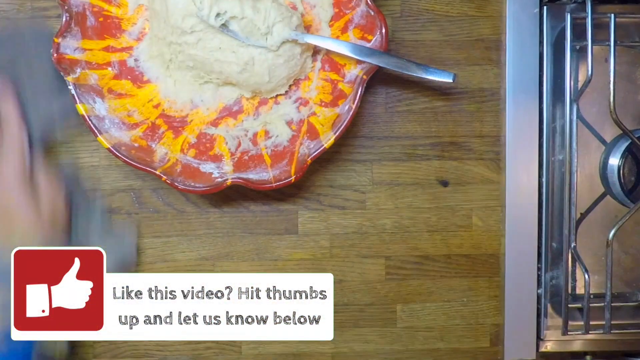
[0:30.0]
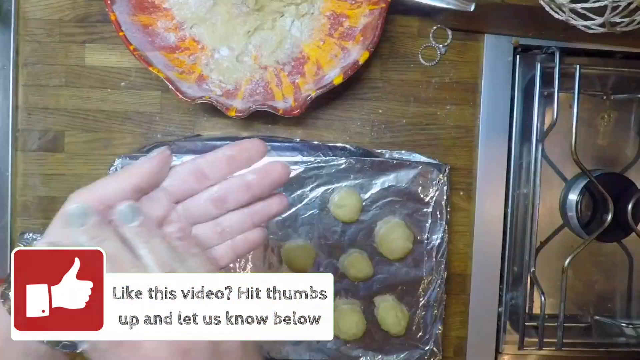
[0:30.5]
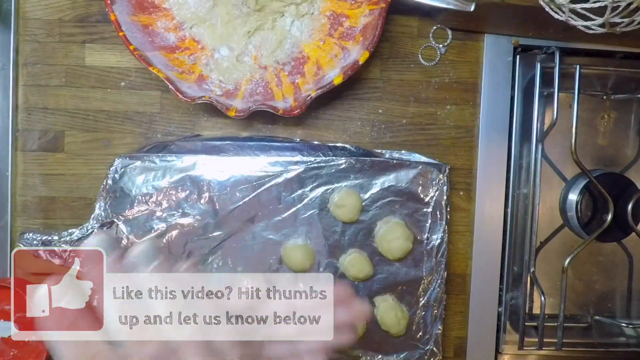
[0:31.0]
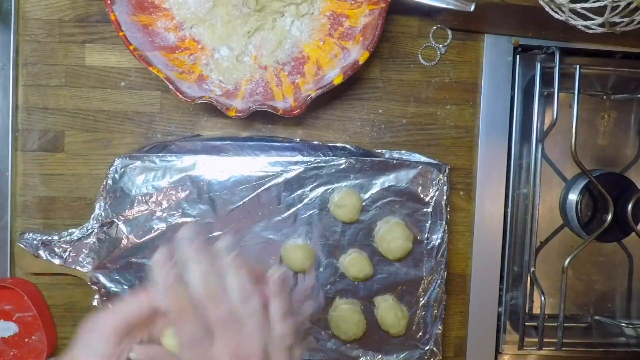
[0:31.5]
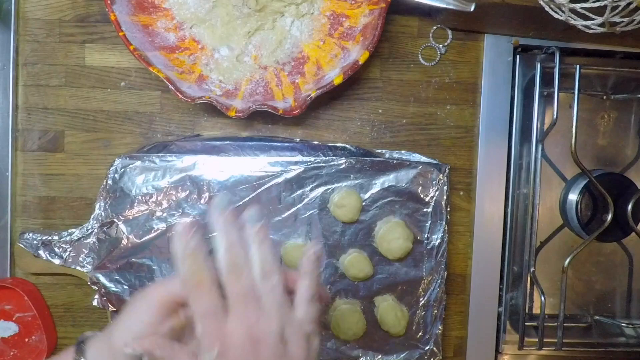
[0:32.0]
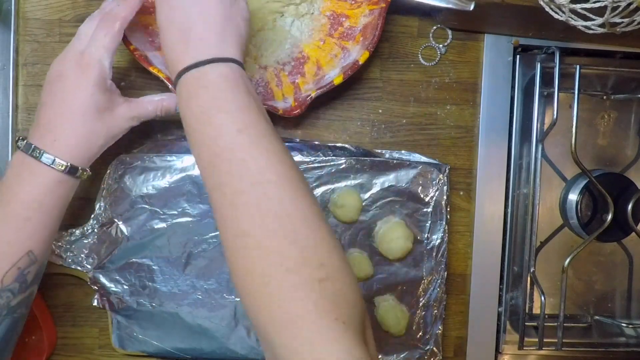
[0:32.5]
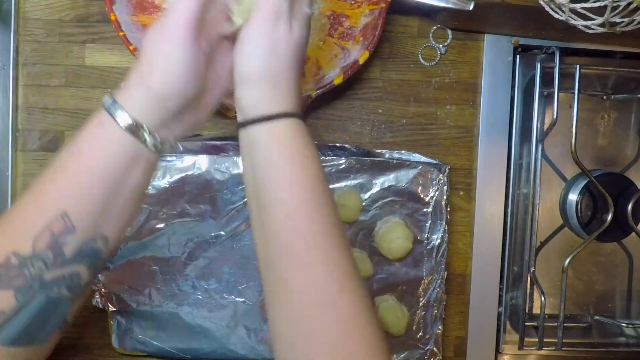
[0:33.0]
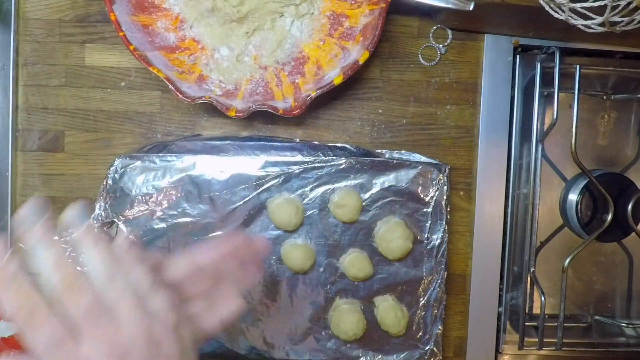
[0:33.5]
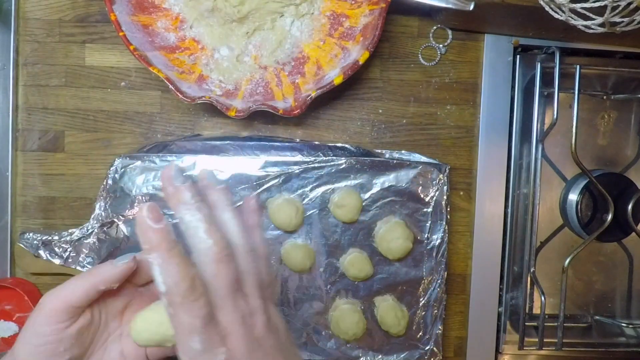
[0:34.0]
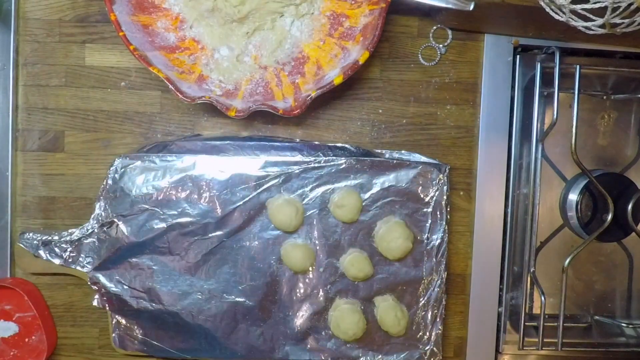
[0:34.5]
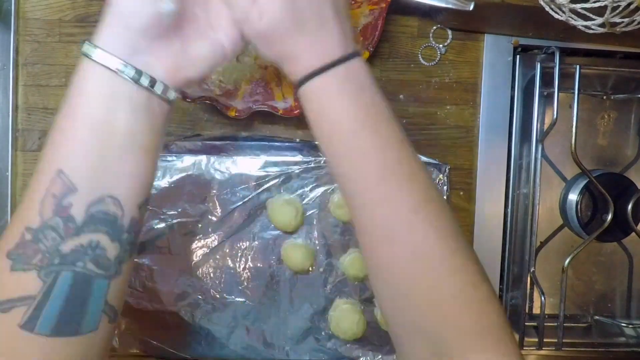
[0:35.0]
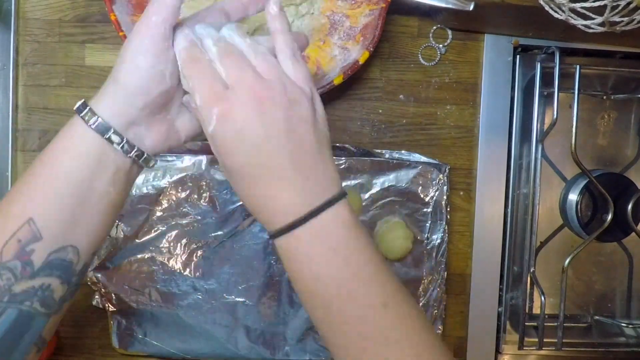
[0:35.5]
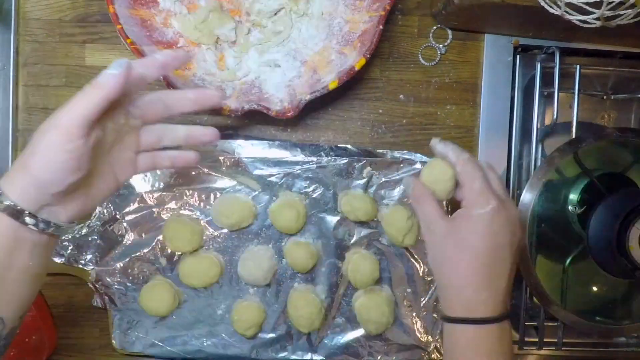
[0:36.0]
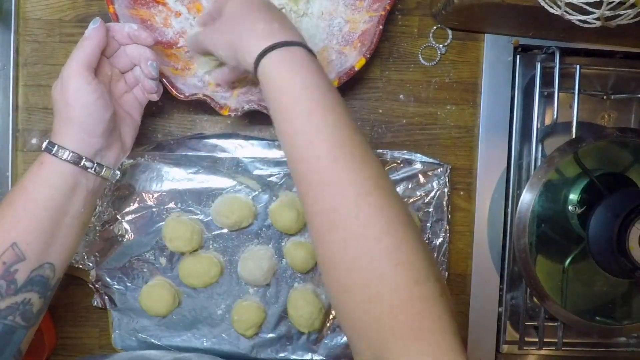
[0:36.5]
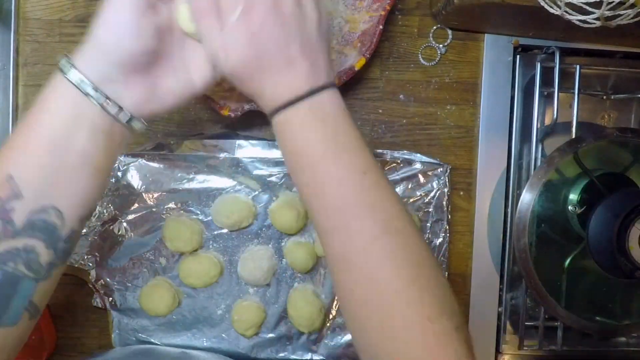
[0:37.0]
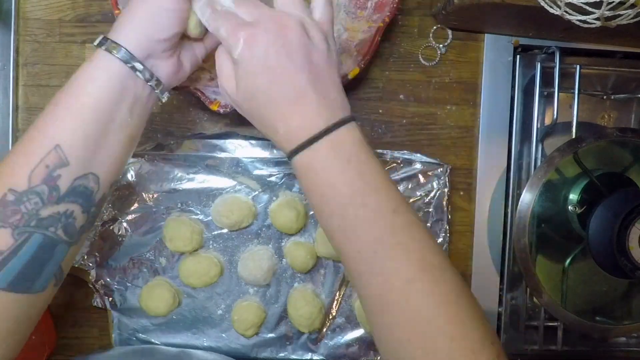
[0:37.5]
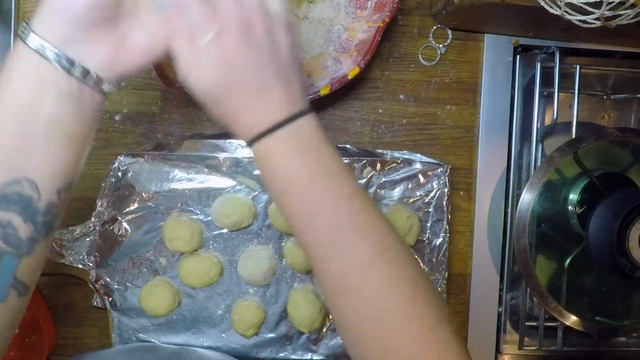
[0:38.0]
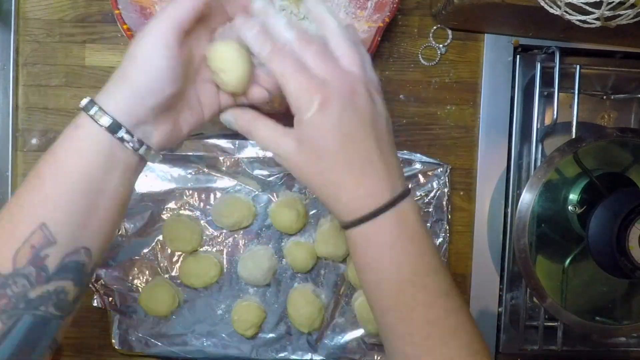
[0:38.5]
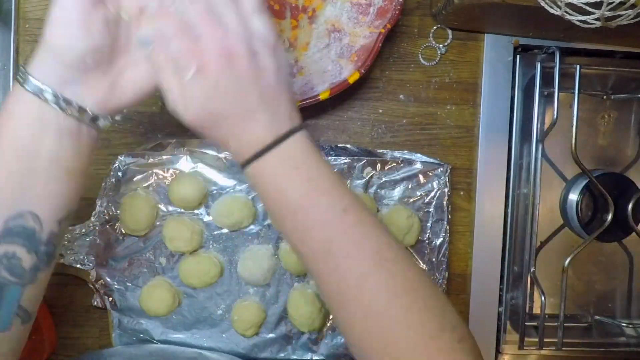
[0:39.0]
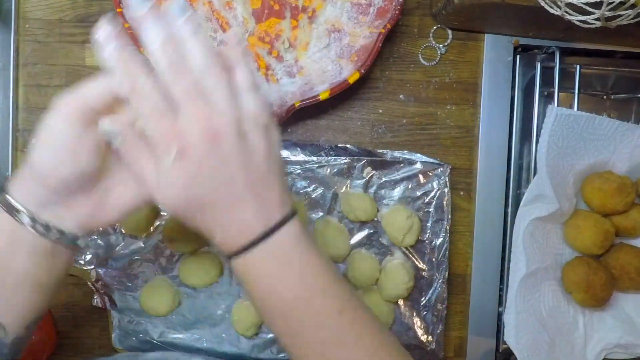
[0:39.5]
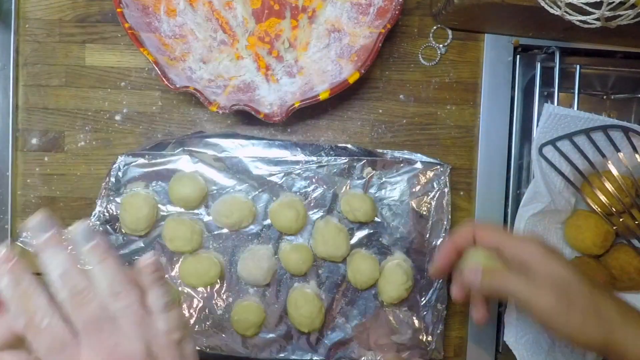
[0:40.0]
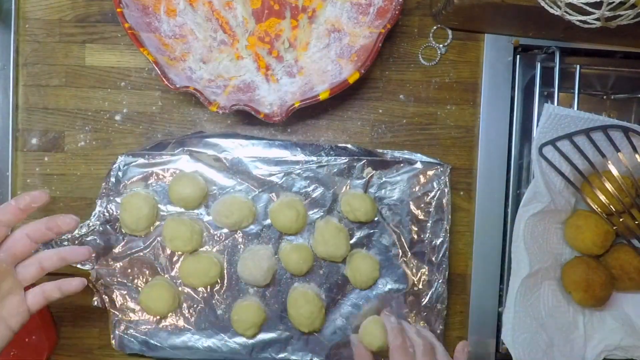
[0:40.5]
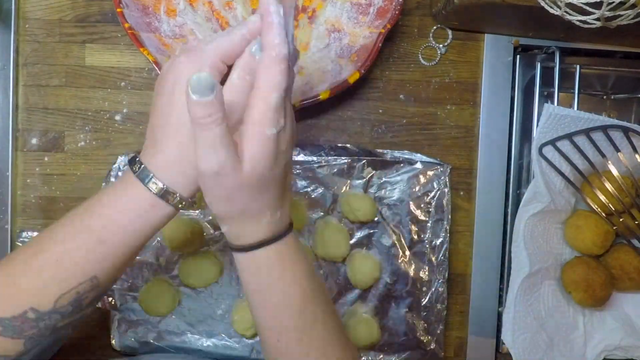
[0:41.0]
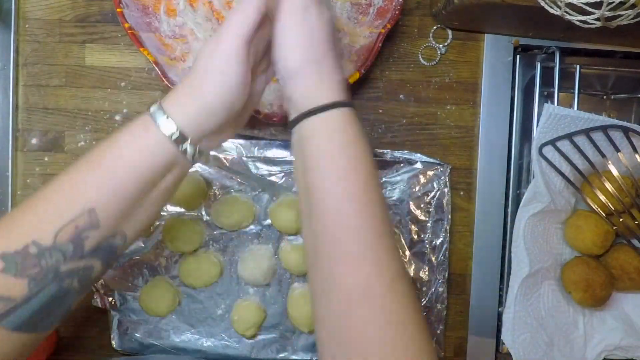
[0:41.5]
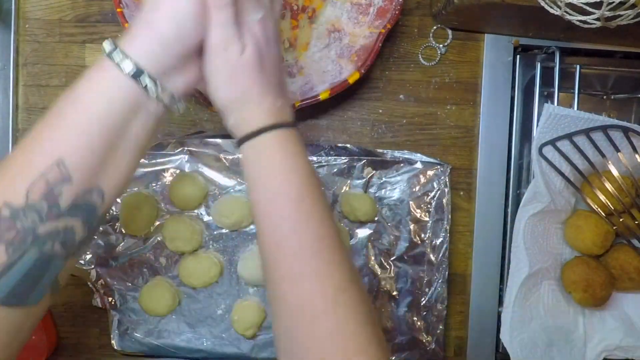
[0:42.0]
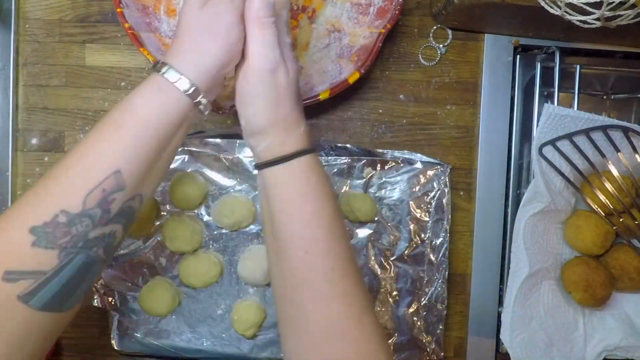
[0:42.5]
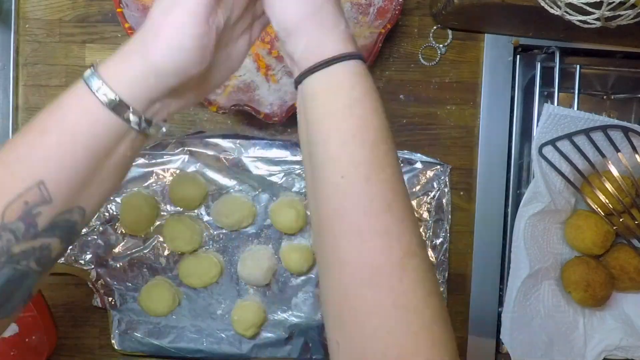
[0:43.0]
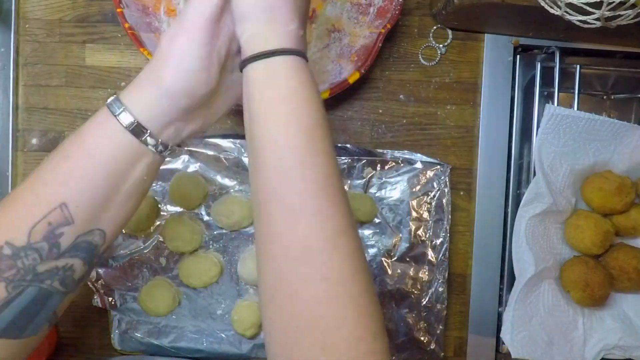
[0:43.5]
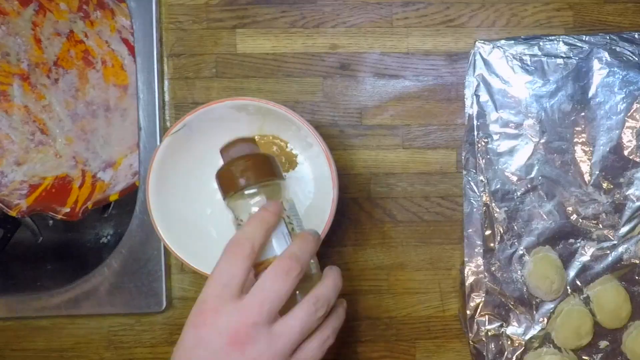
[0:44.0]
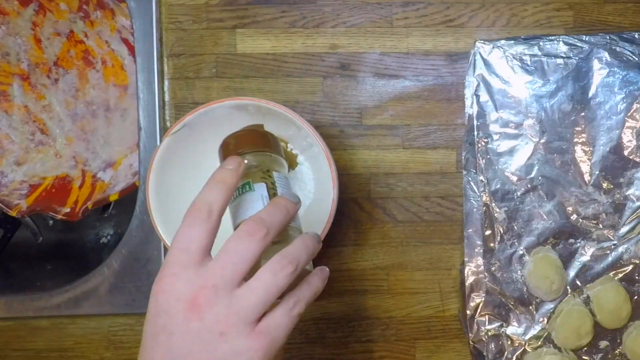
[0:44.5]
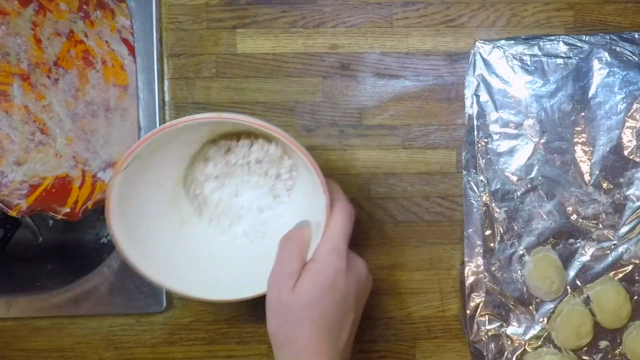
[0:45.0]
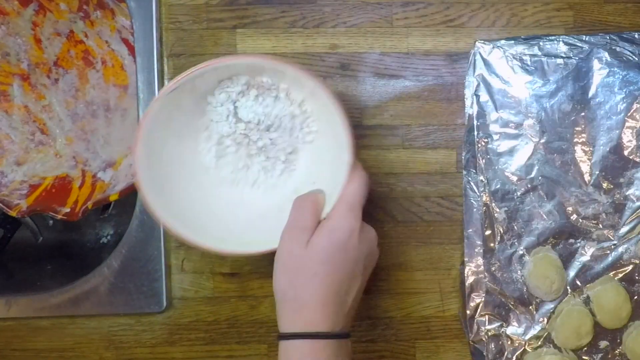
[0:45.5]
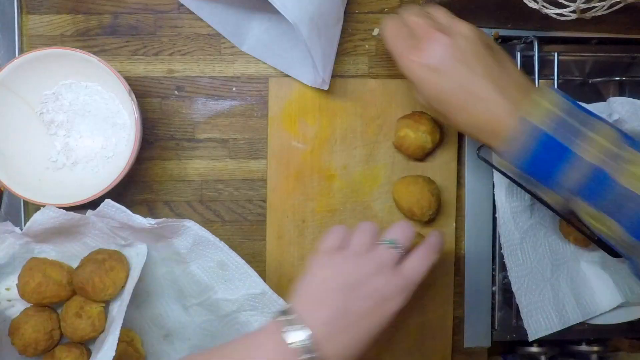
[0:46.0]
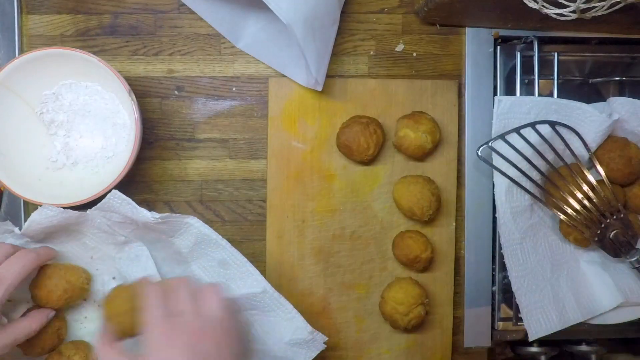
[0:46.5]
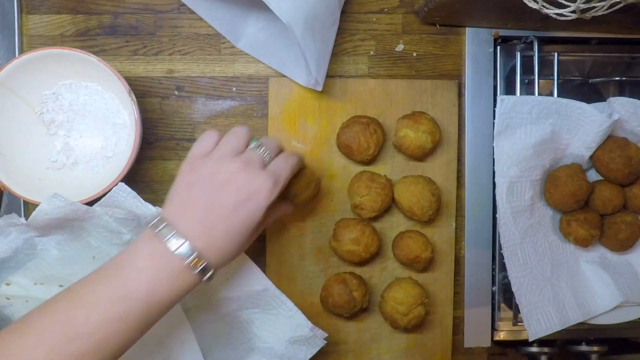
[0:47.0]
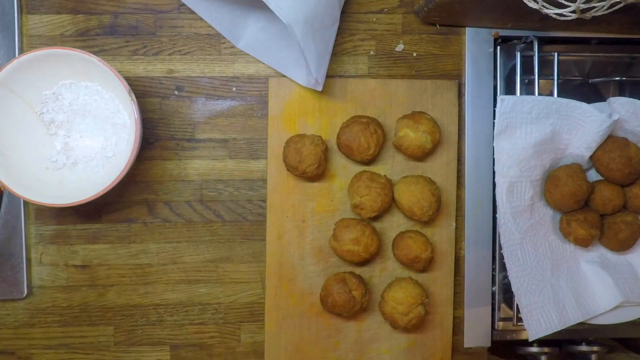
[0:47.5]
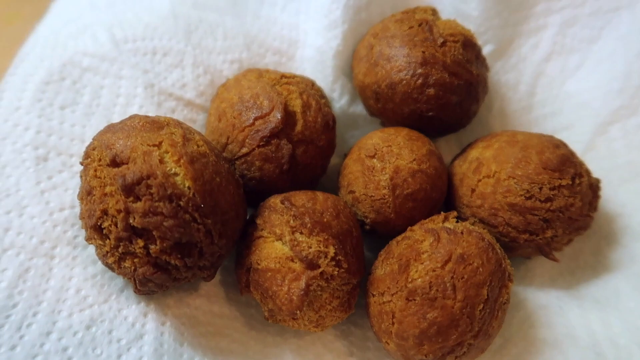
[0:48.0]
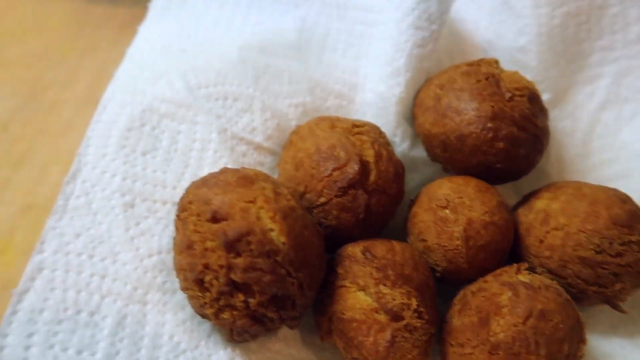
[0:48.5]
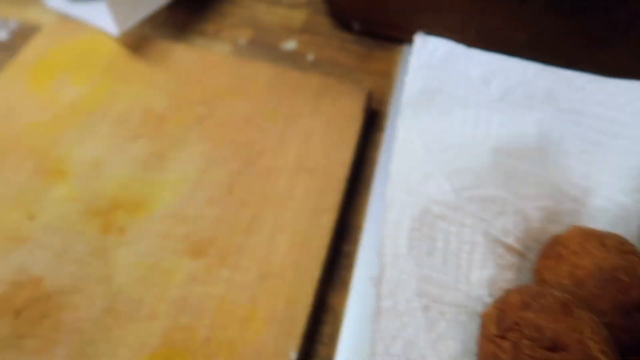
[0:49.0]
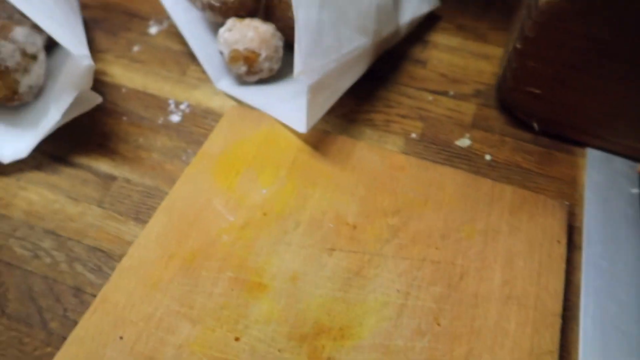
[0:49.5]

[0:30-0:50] The thumbs-up prompt to like the video is on screen. The bowl of mixture has a fork sticking out of the middle of it, with the cooker burner to the right. The woman pulls out the batter to make what look like little round donut holes, and they appear to be frying them to the right. She mixes a little cinnamon or some other topping for the fried donut holes, and cinnamon is added to other items as well. The donut holes end up glazed or coated and packed into little bags, quite a few of them. She has a tattoo on her left arm and small bracelets. They also mix something in a little bowl, possibly to dip the donut holes in after frying.